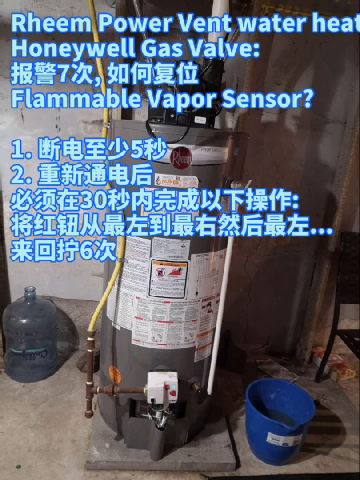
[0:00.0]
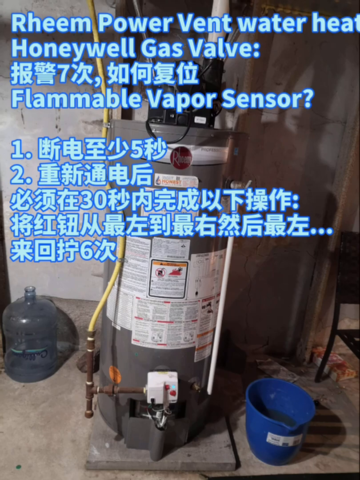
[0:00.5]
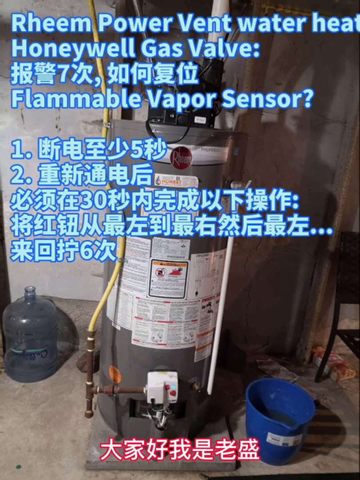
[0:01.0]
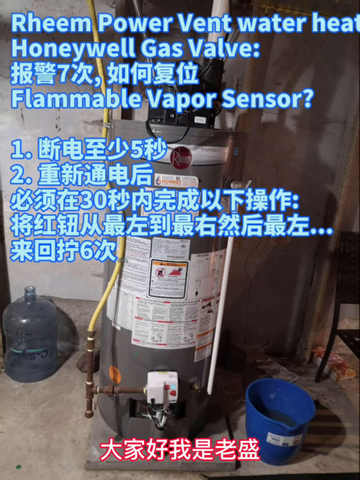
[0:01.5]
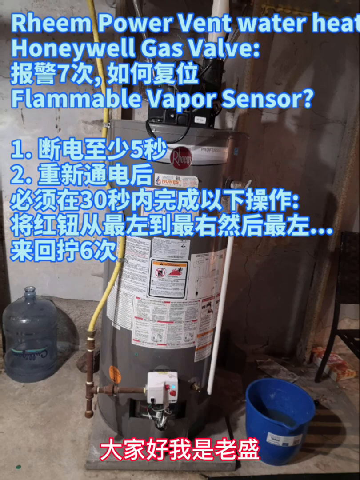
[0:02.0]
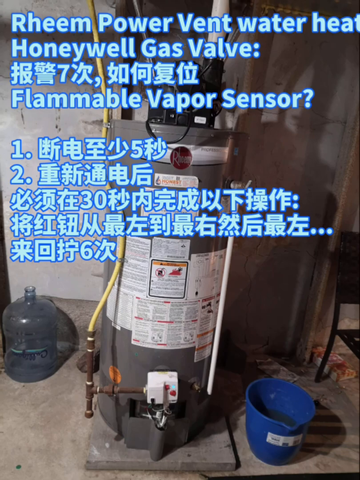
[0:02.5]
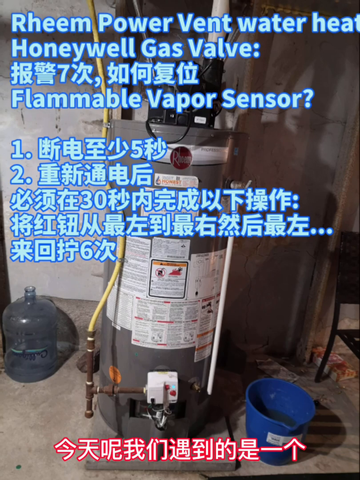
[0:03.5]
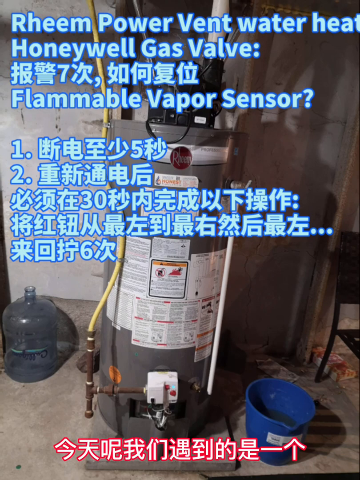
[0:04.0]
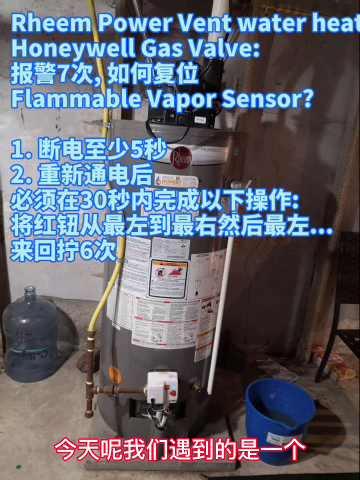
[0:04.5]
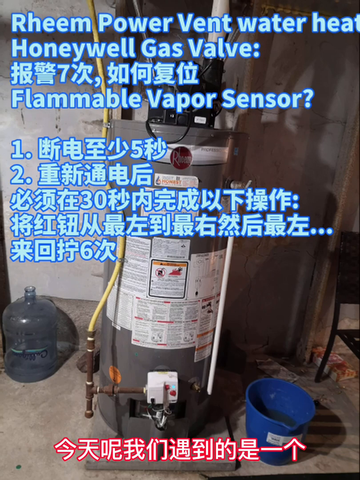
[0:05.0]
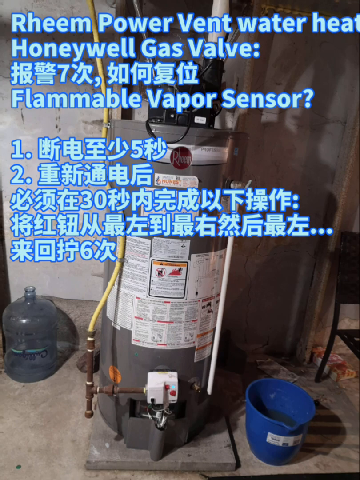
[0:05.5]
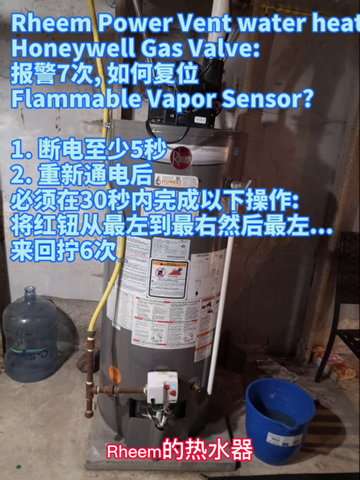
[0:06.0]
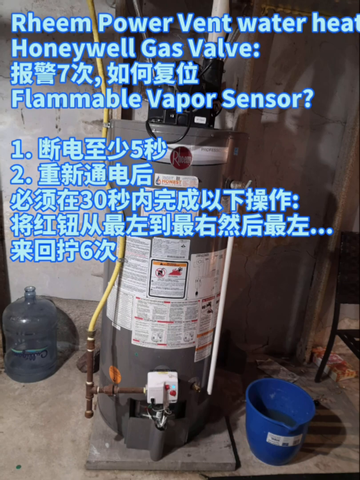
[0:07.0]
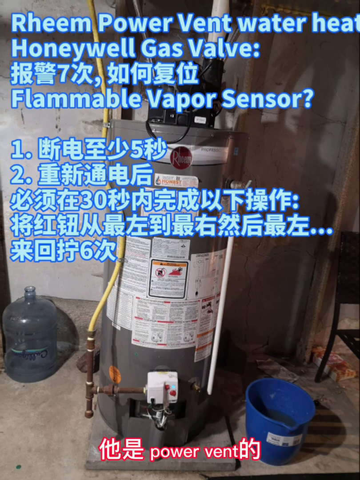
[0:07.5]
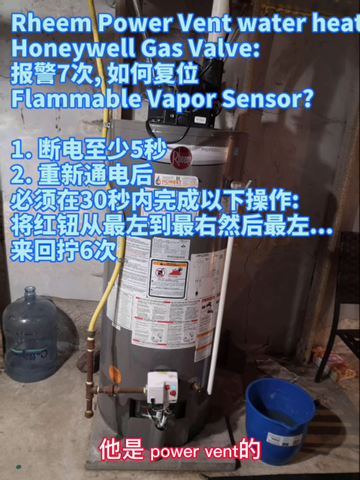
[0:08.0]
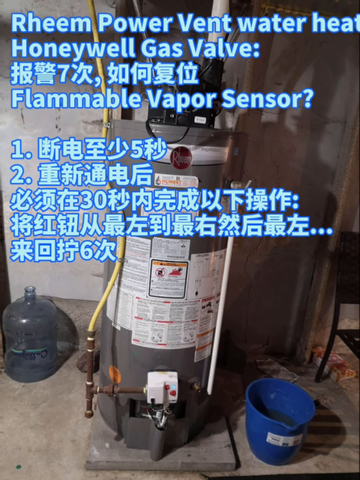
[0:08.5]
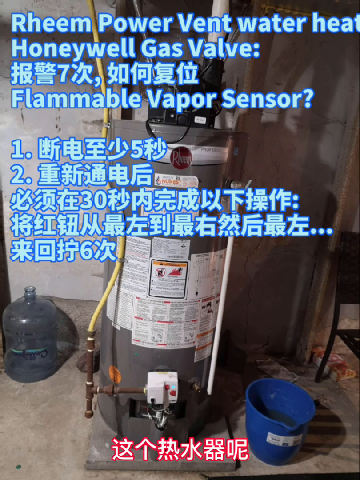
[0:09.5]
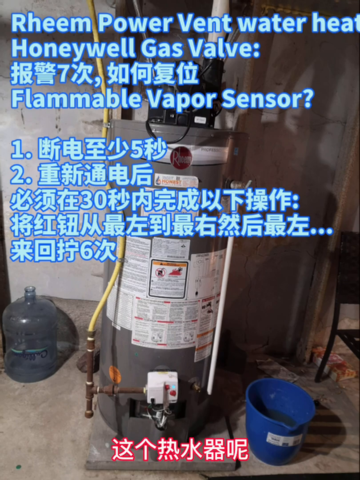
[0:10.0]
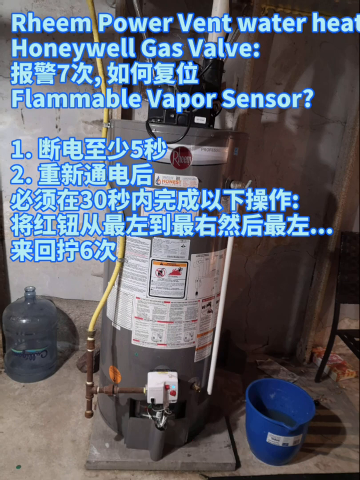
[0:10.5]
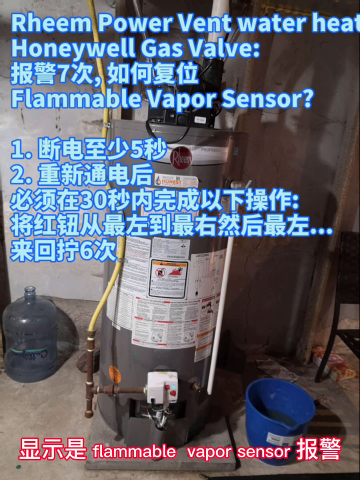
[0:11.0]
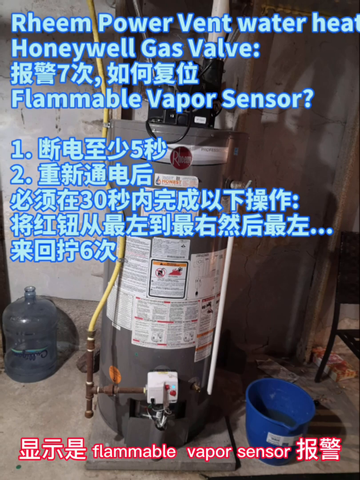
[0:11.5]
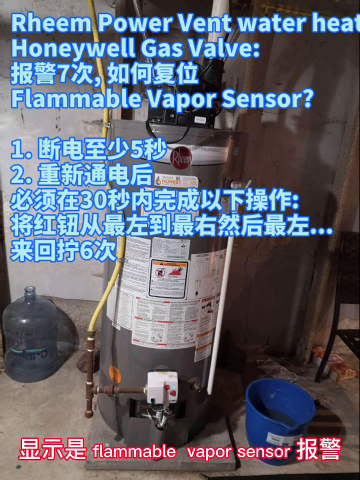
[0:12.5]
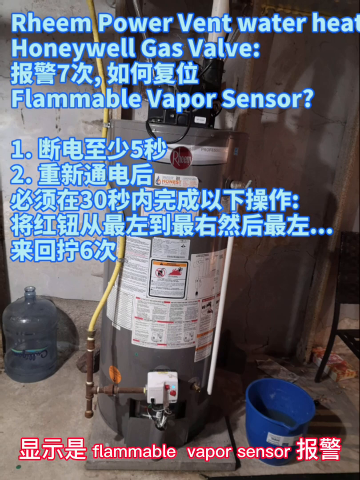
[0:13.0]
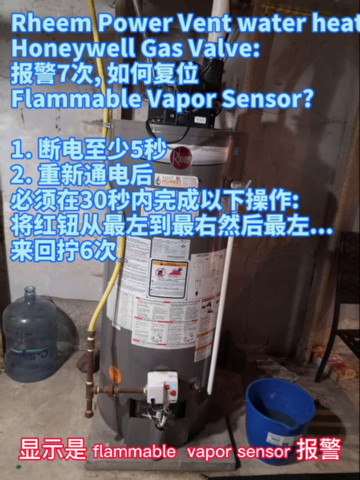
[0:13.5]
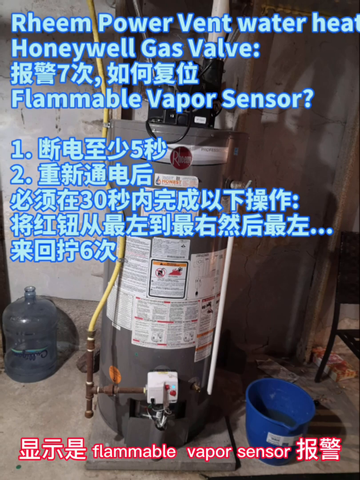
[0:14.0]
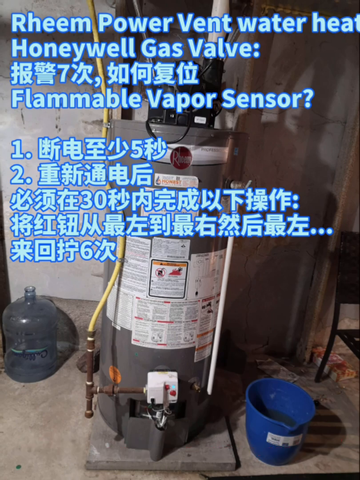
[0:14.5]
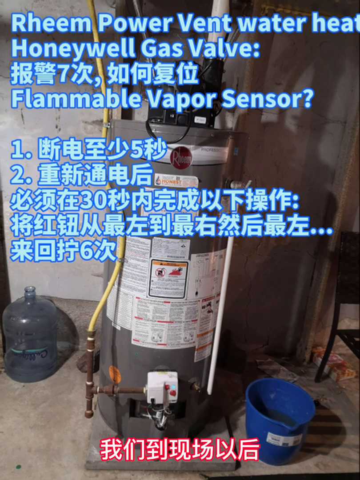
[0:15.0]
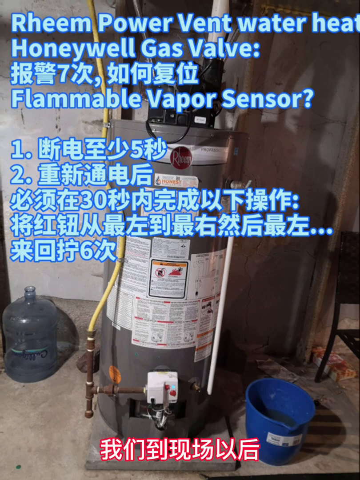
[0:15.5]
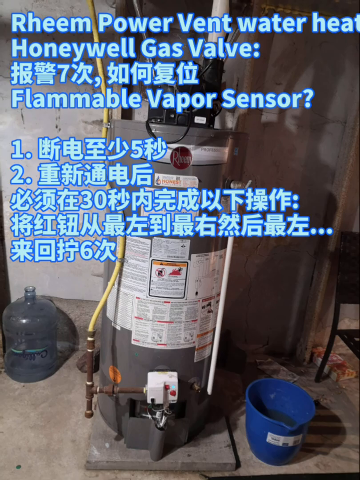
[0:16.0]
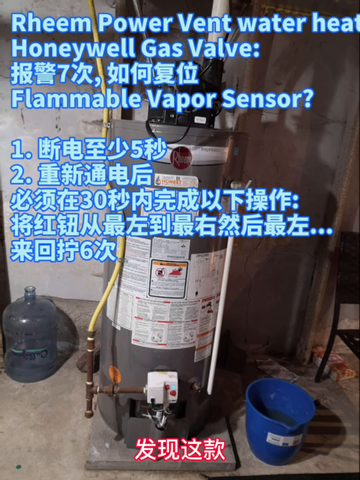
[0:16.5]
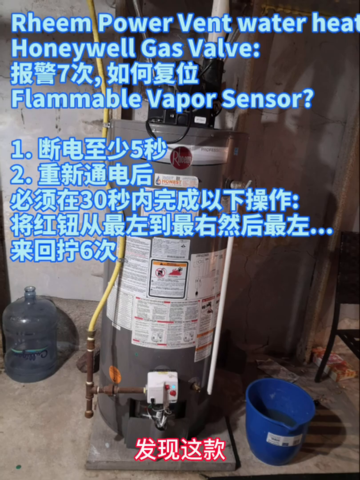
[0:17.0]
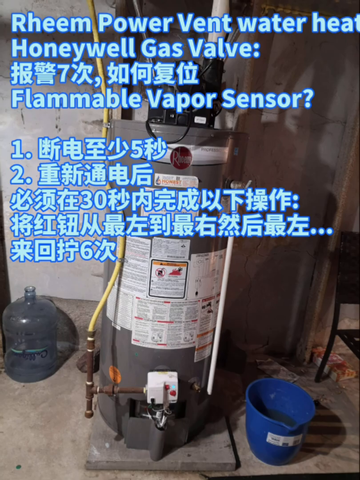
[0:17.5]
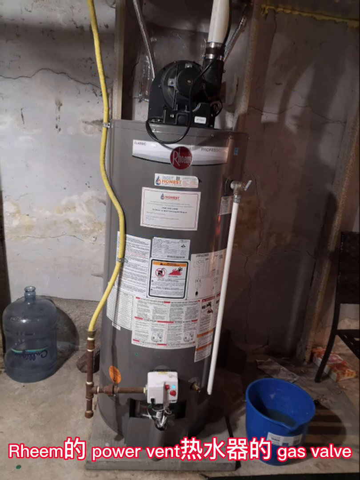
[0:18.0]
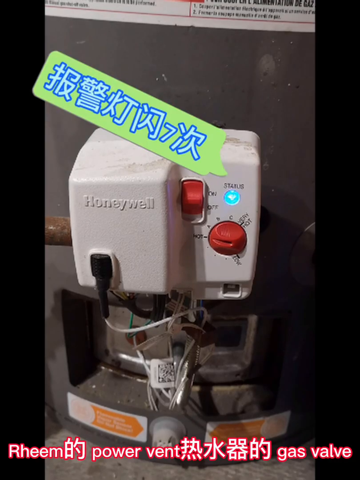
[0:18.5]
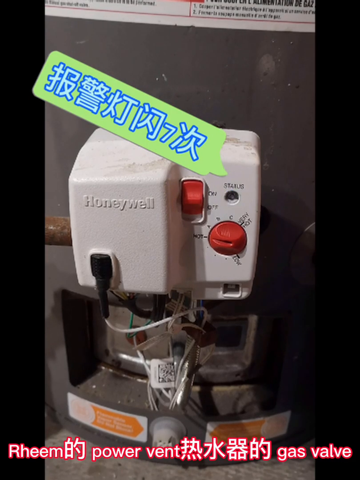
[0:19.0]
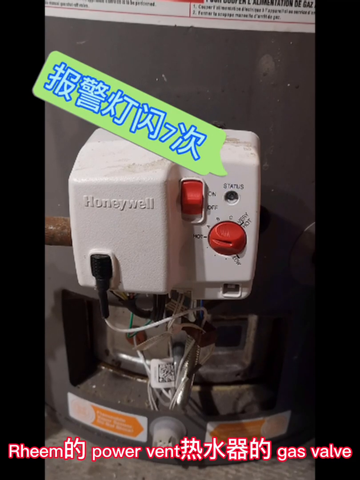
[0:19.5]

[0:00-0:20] The video is about a Rheem power vent water heater with a Honeywell gas valve. It appears to show a gas valve that gets installed on the water heater.